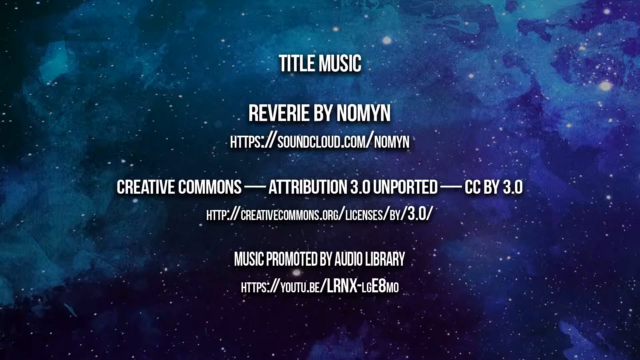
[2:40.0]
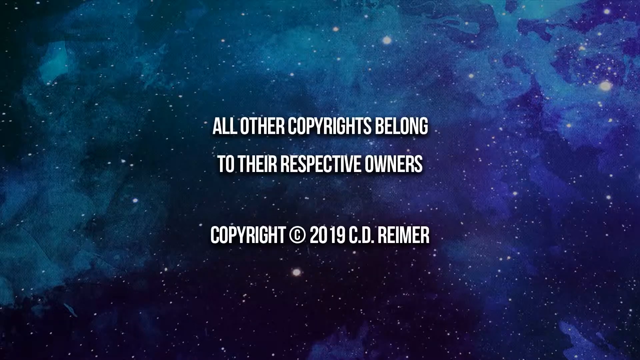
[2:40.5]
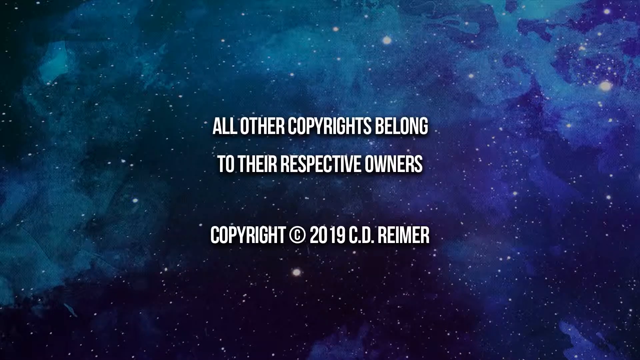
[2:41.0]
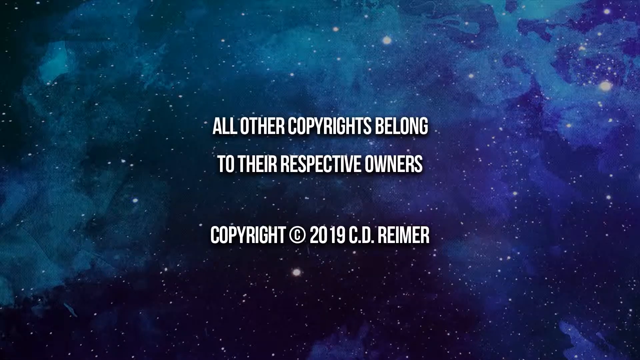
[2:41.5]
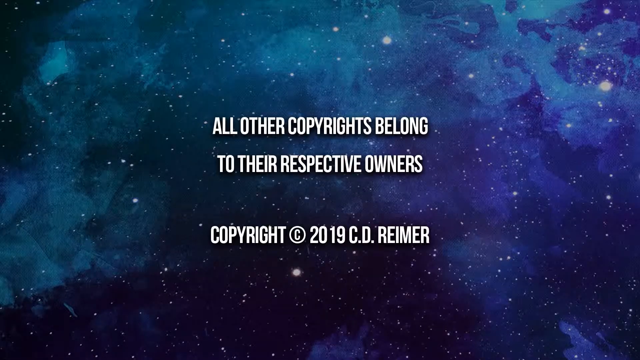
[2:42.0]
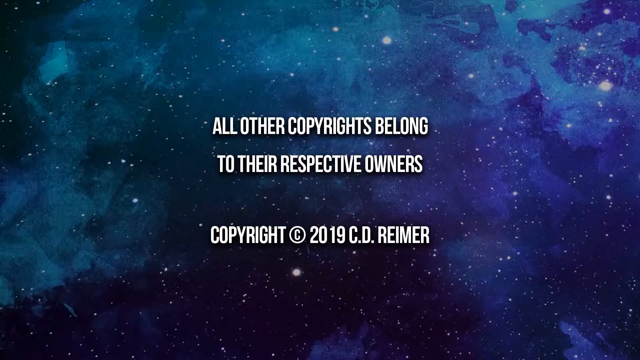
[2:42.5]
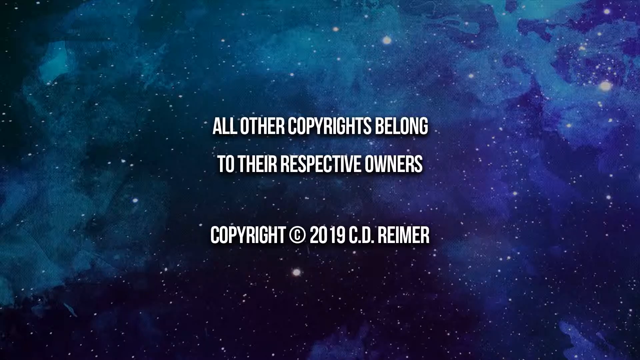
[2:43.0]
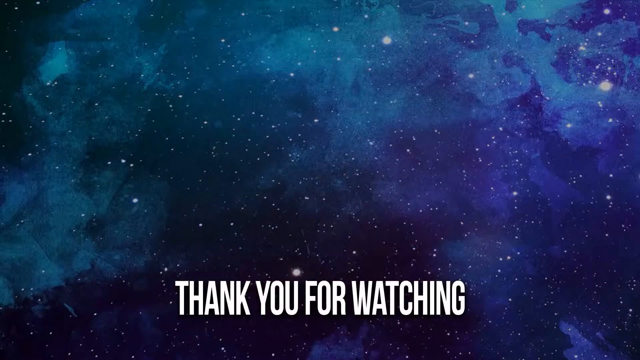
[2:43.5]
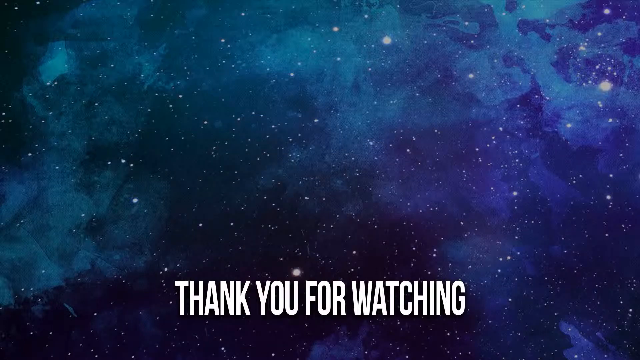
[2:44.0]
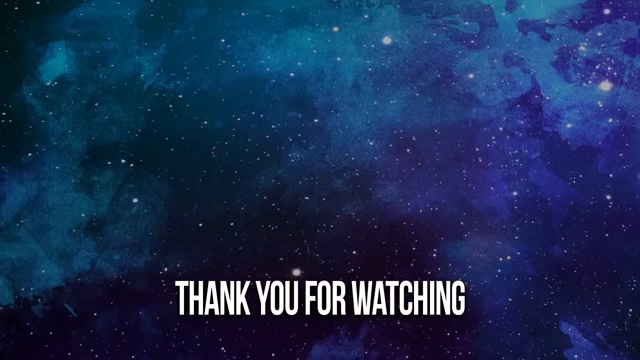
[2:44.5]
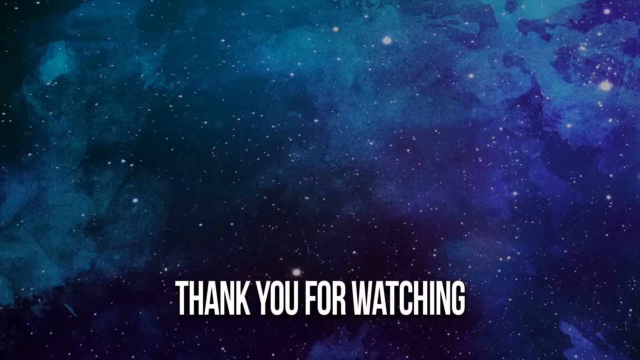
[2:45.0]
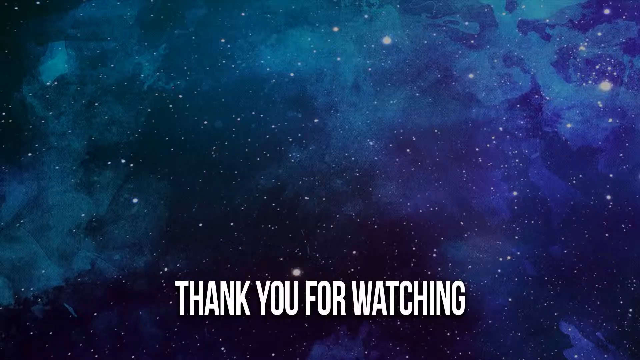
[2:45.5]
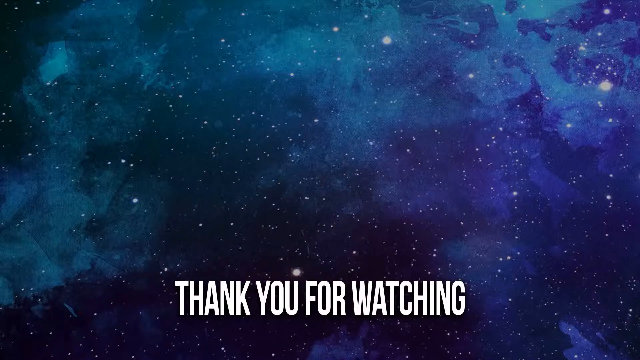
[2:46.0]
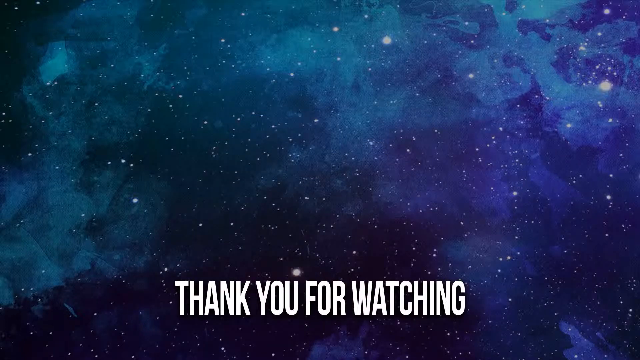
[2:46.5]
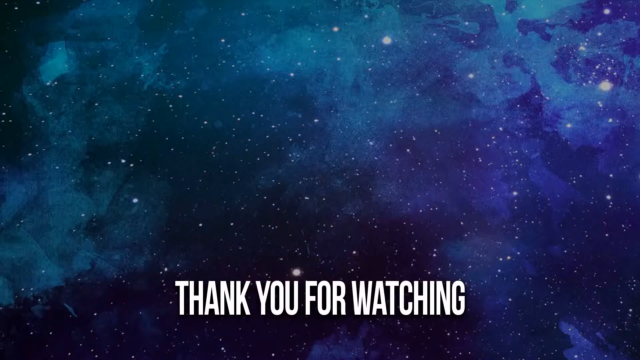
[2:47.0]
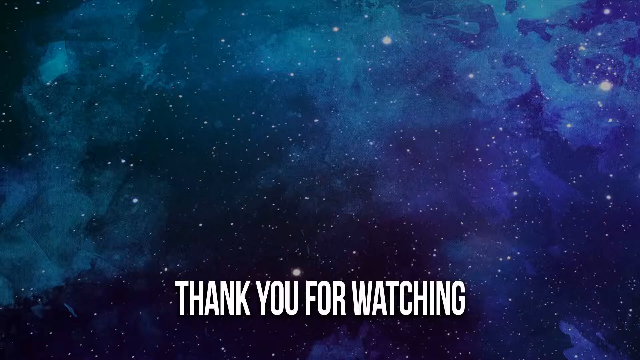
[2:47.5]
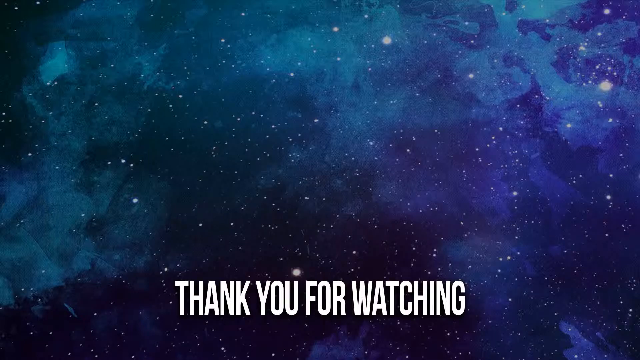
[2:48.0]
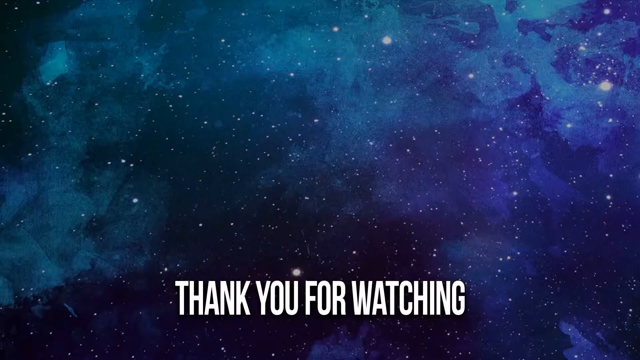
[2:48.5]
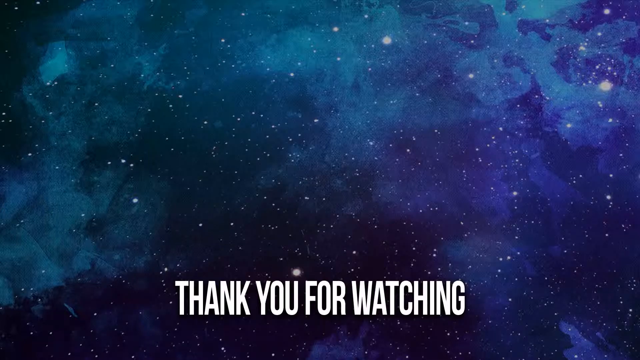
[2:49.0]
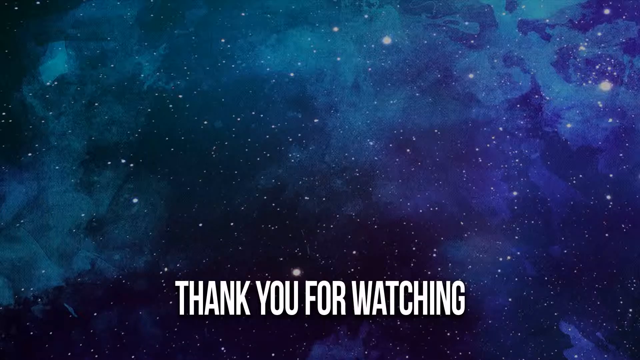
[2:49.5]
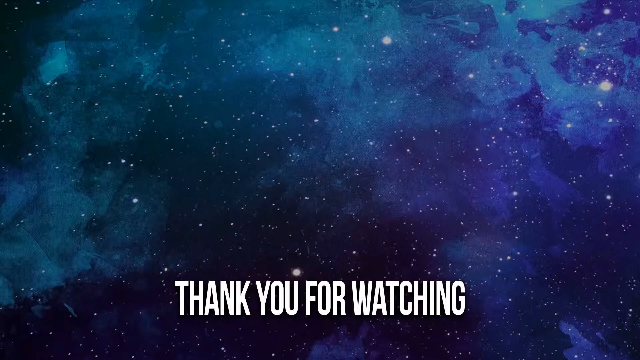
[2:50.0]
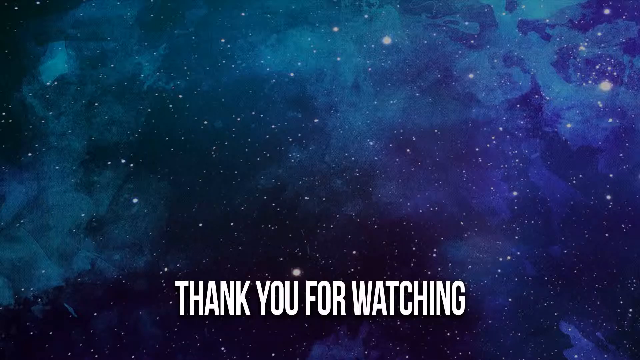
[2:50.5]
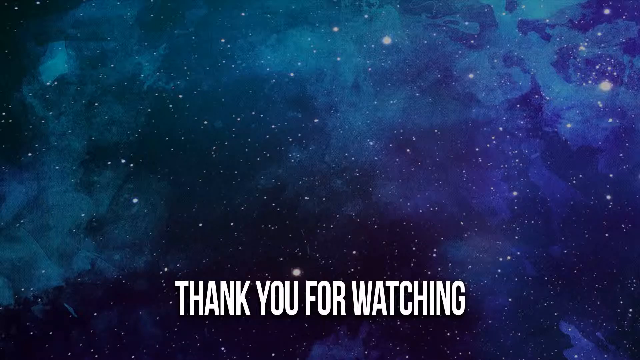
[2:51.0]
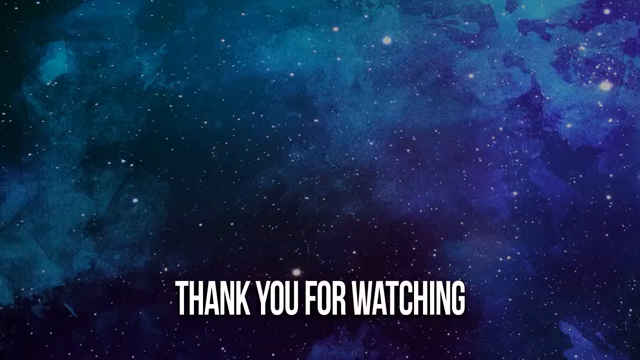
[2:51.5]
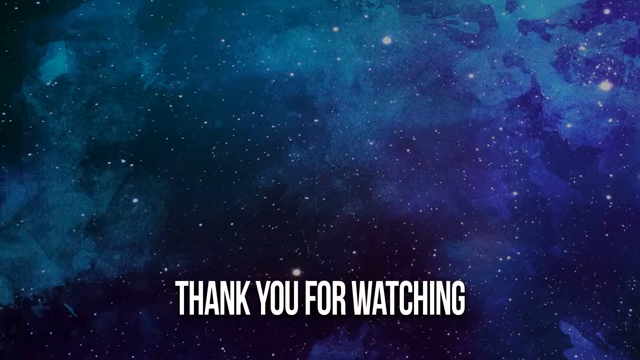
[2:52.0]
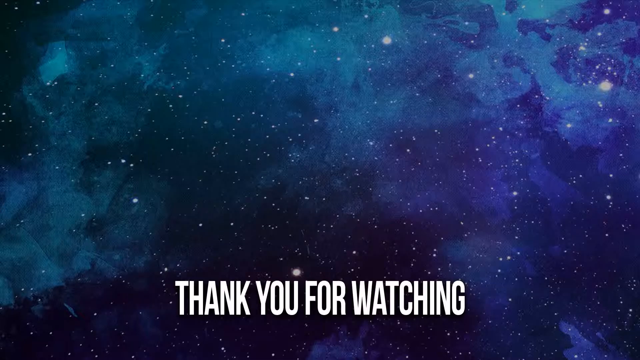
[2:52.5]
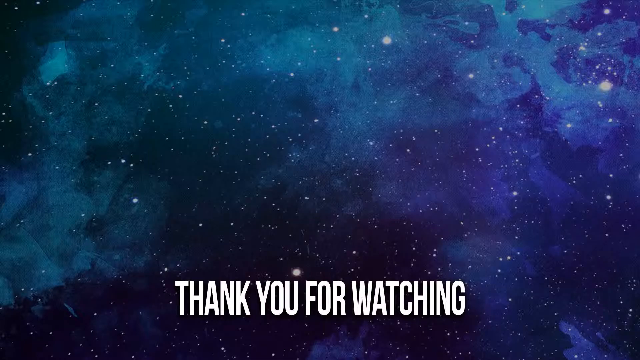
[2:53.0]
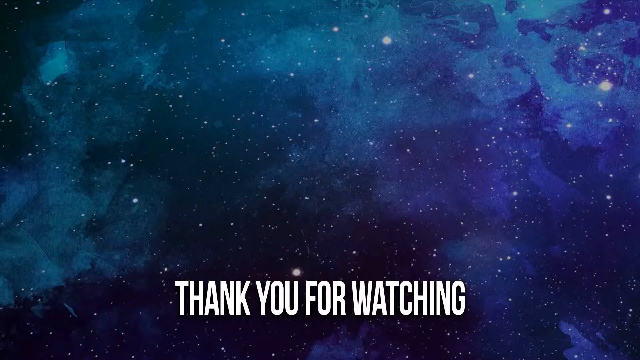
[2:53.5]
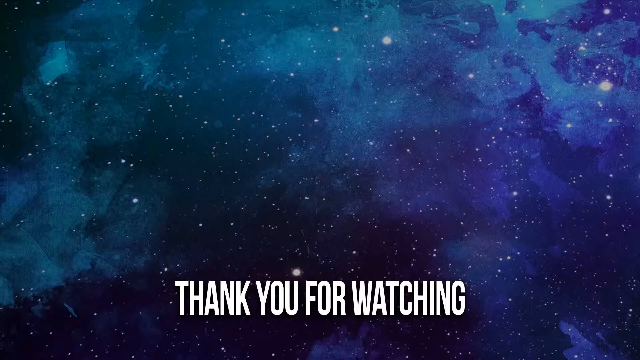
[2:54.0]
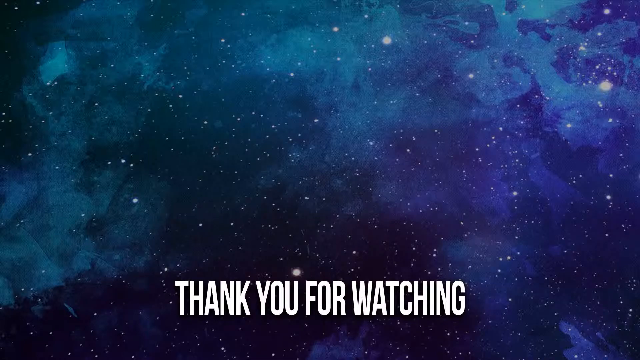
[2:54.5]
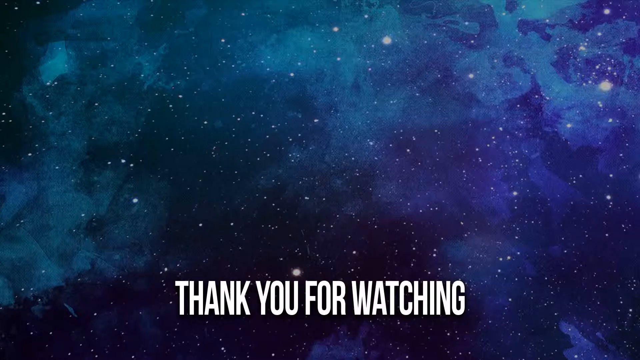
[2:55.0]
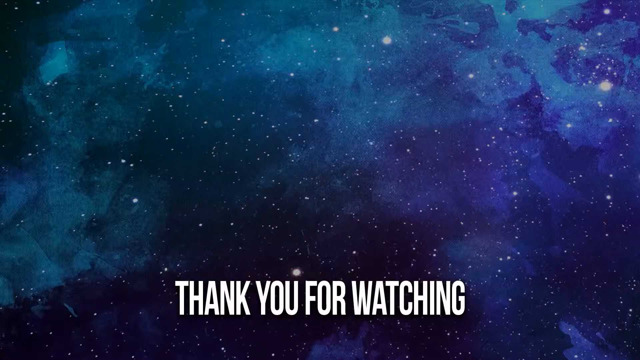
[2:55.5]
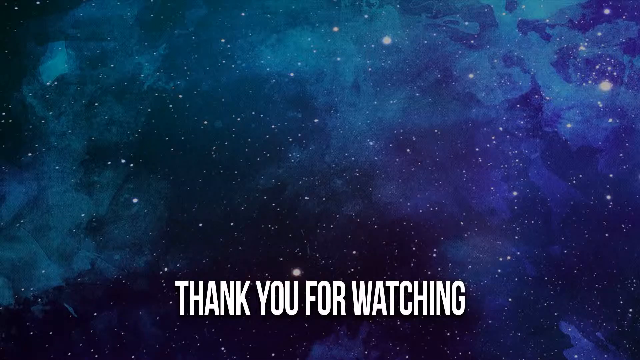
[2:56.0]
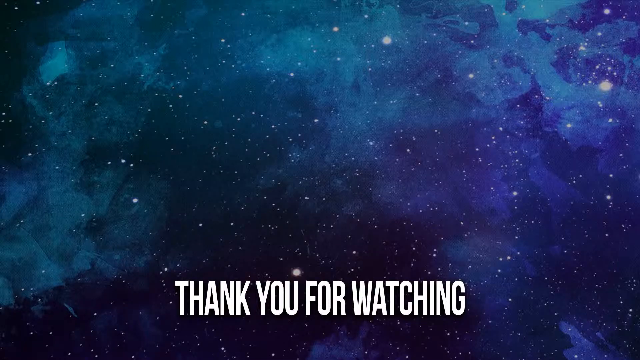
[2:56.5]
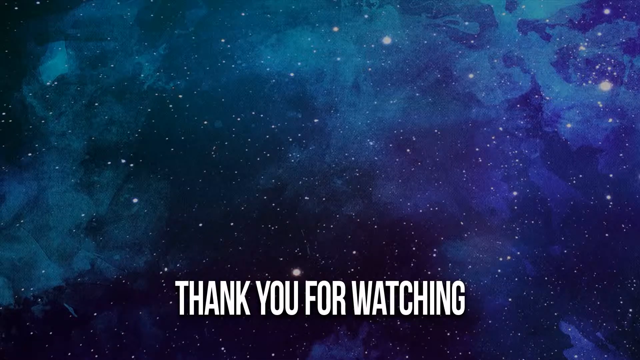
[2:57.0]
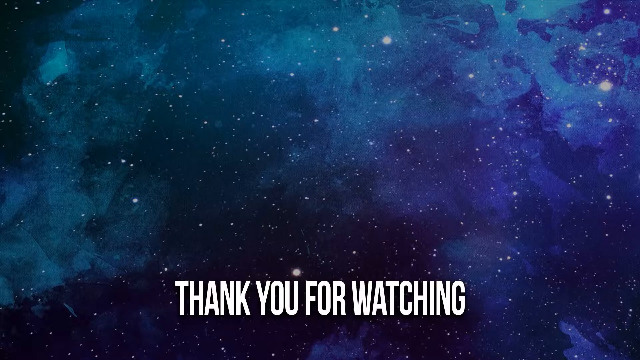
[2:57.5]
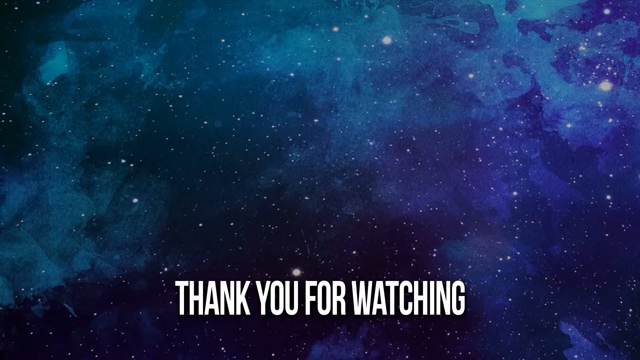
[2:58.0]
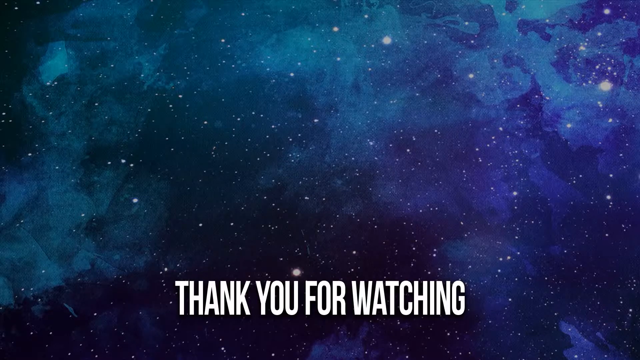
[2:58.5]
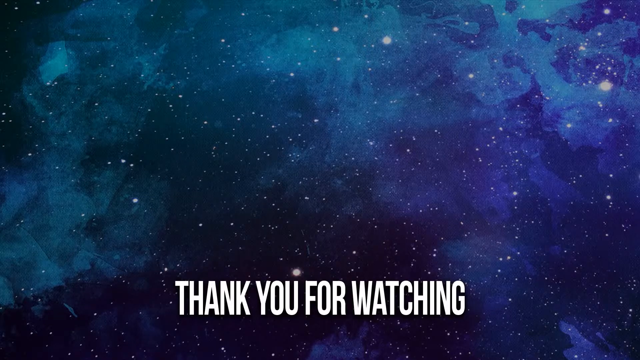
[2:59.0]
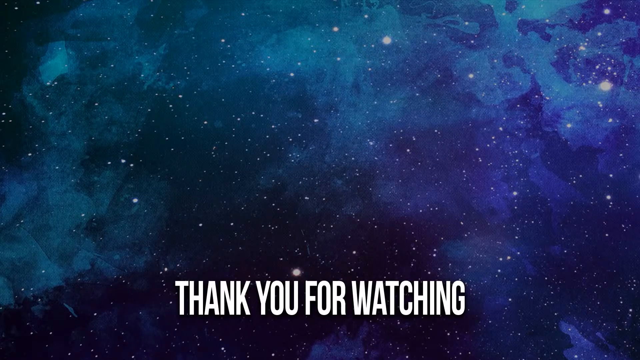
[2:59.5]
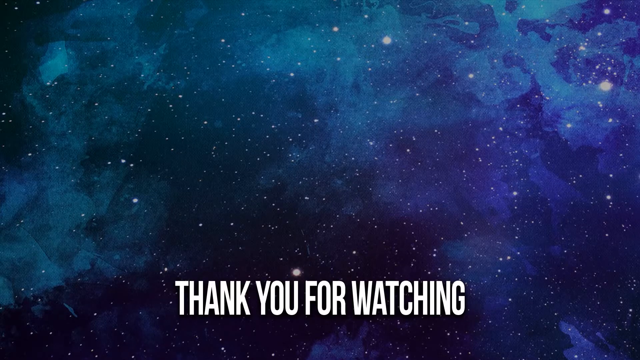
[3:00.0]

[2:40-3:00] The credits read "title music" at the top, then after some space list "Revier by Nomin", with a website link right below it in a smaller font that says "https://soundcloud.com/Nomin". After more space, the text says "creative commons / attribution 3.0 unported / CC by 3.0", with another website right below it: "creativecommons.org/licenses/by/3.0/". After another space comes "music promoted by audio library youtu.be/lrnx-lge8mo". This then disappears and the text "all other copyrights belong to the respective owners copyright 2019 c. d. reimer" appears. It stays for a little while and then changes to text that says "thank you for watching", still in all caps, which stays longer, through to the end of the video.